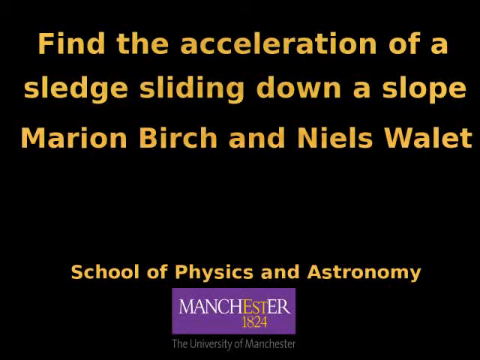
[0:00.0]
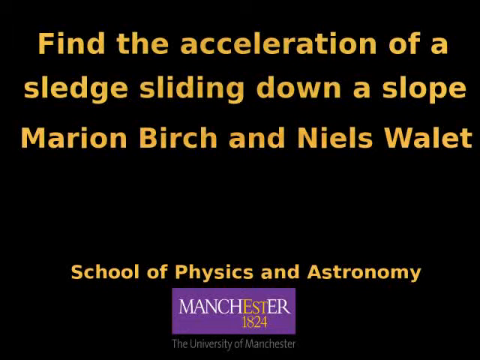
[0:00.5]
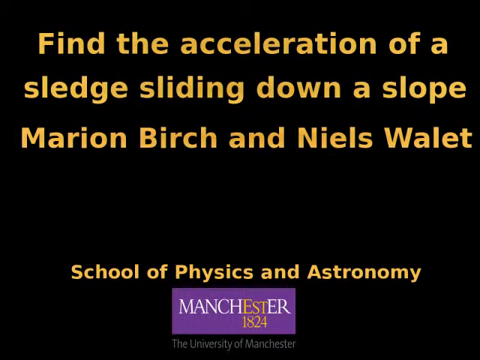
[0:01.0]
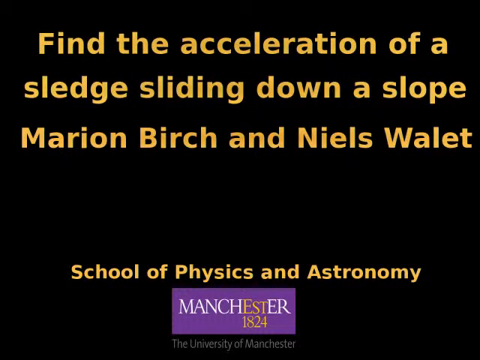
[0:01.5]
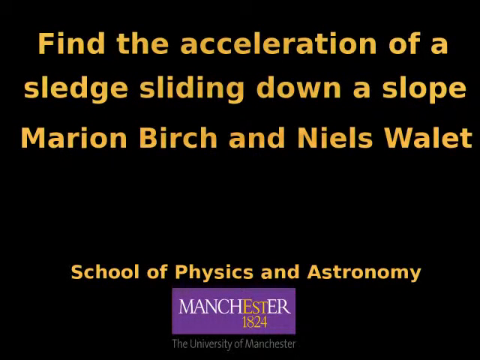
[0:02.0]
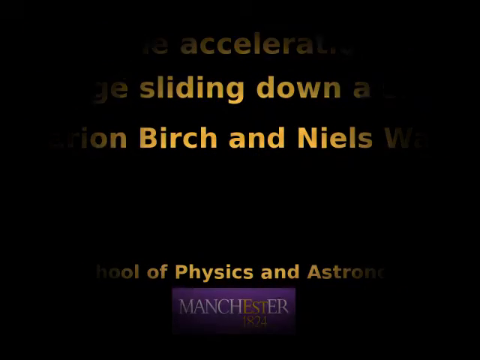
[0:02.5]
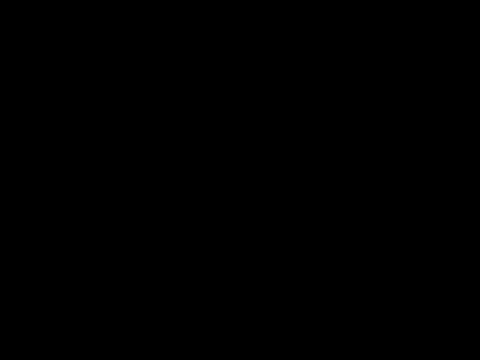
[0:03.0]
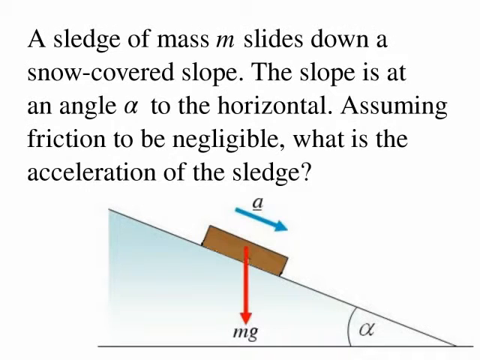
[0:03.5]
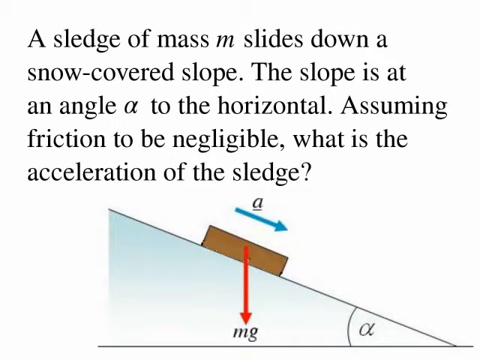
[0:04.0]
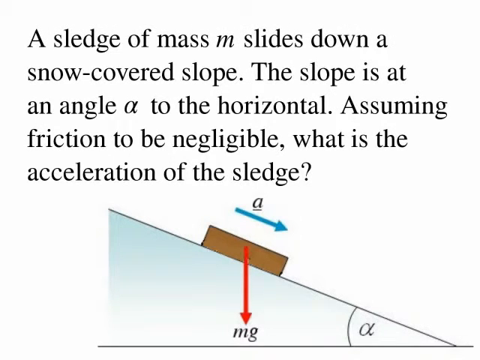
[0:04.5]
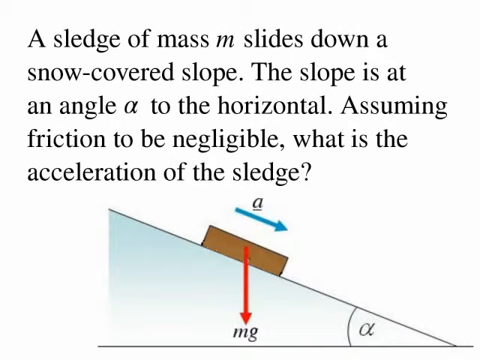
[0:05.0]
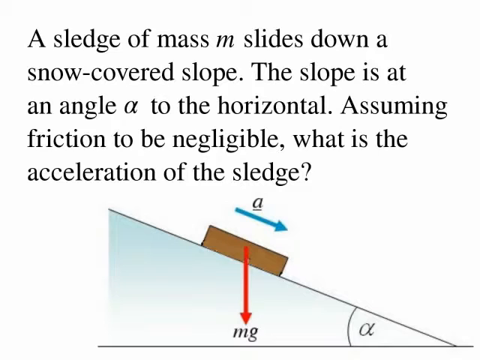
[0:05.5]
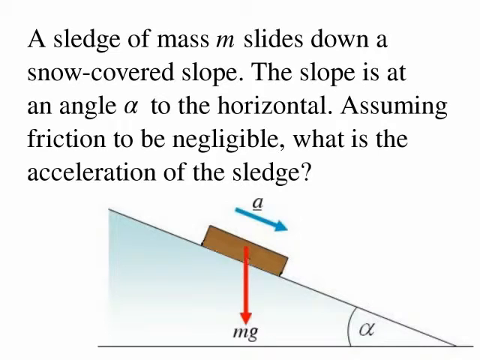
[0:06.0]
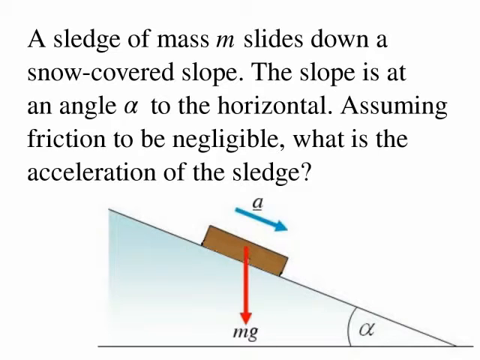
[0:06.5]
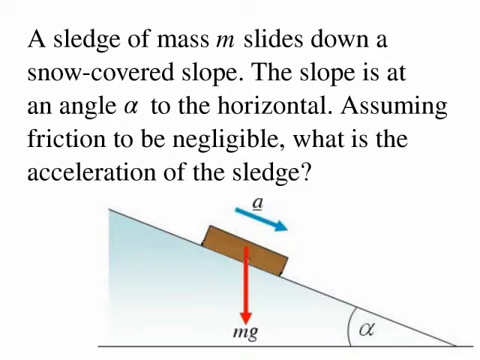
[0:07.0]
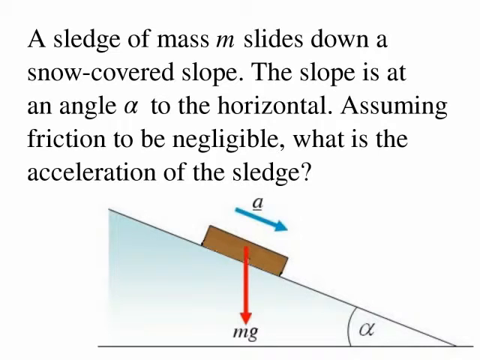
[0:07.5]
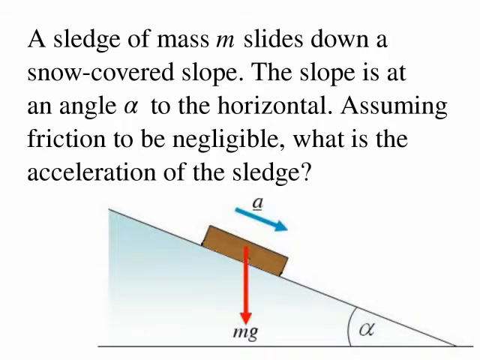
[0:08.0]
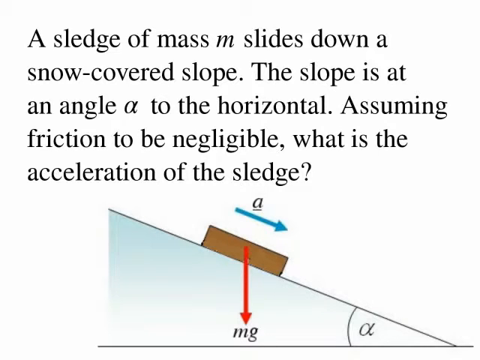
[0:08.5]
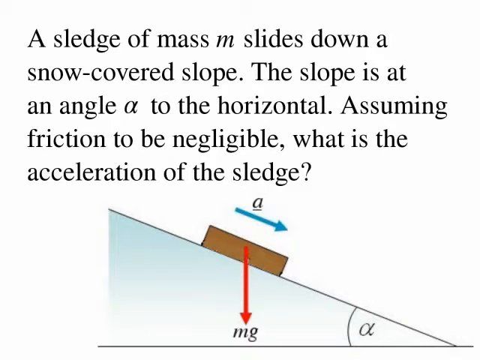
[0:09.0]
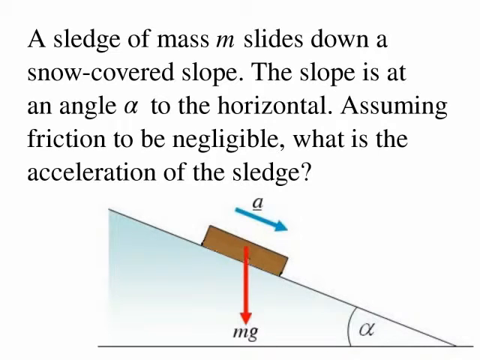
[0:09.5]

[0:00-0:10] The video opens with a title in yellow text on a black background: "Find the acceleration of a sledge sliding down a slope by Marion Birch and Niels Wallet. School of Physics and Astronomy, Manchester, 1824." A task is also shown: "A sledge of mass m slides down a snow-covered slope. The slope is at an angle alpha to the horizontal, assuming friction to be negligible. What is the acceleration of the sledge?" A picture of the problem with arrows and the task data is visible.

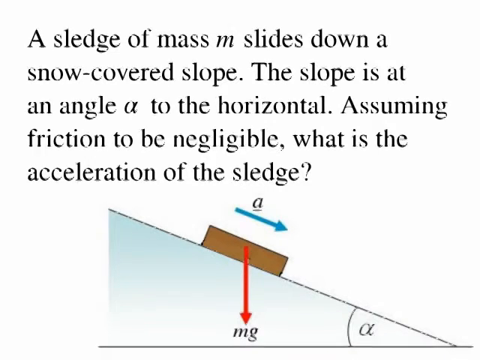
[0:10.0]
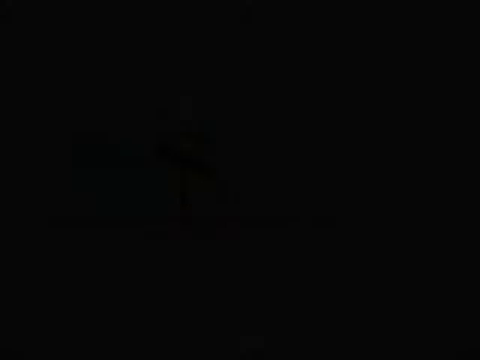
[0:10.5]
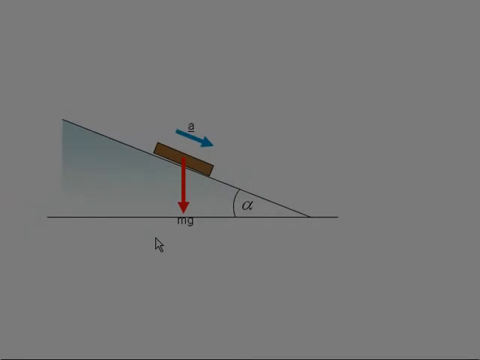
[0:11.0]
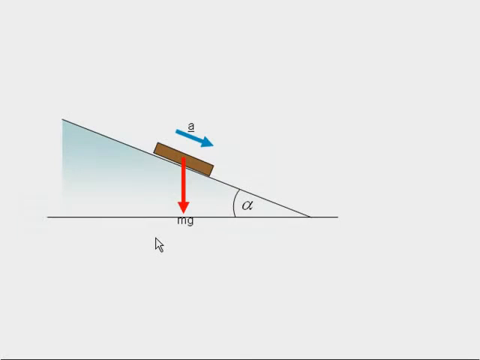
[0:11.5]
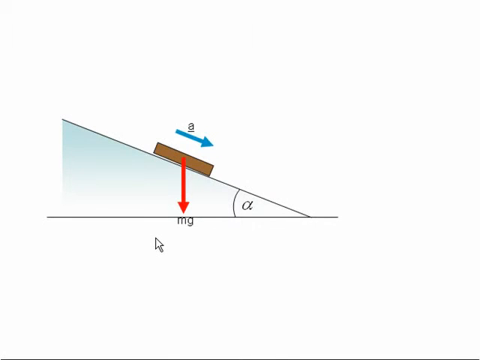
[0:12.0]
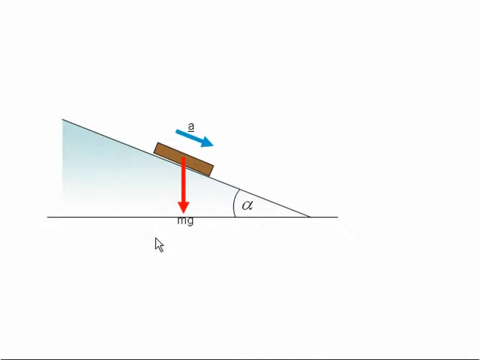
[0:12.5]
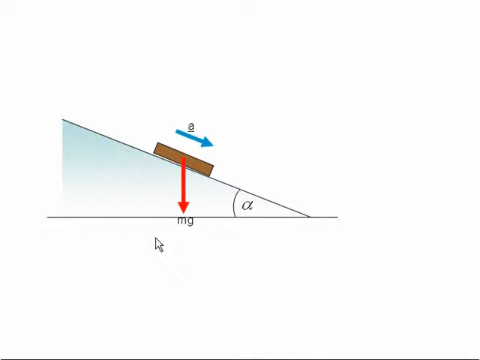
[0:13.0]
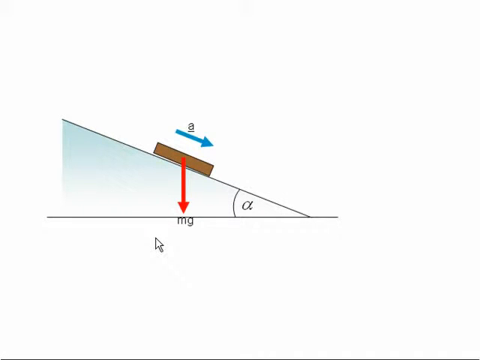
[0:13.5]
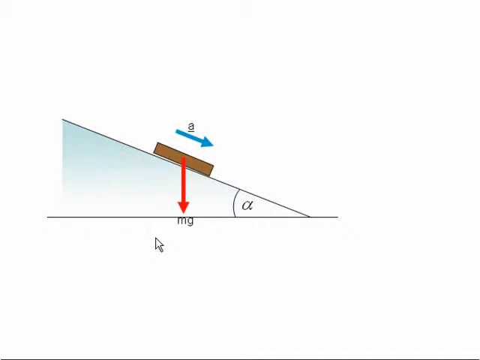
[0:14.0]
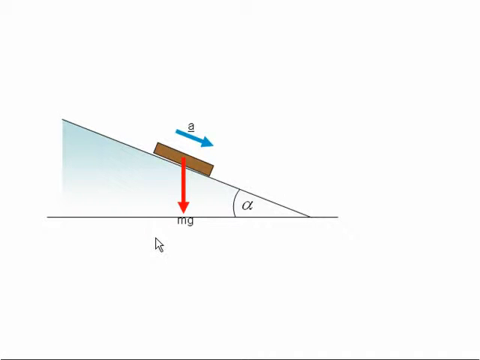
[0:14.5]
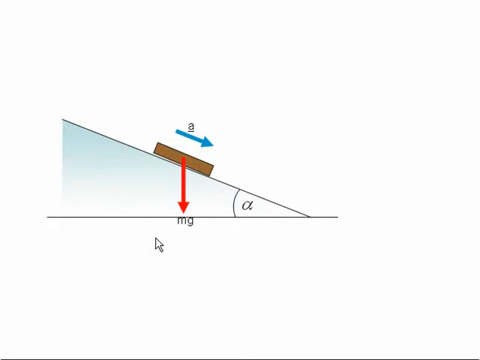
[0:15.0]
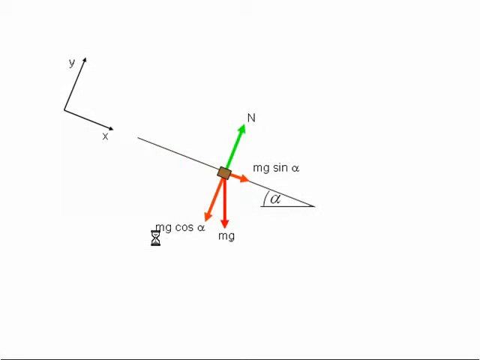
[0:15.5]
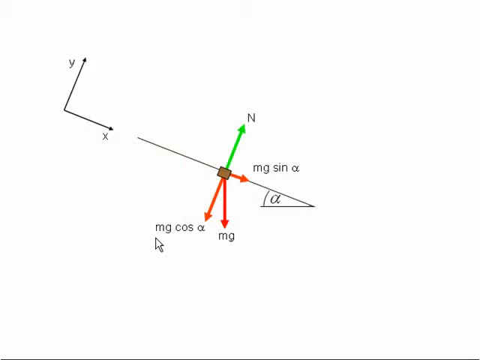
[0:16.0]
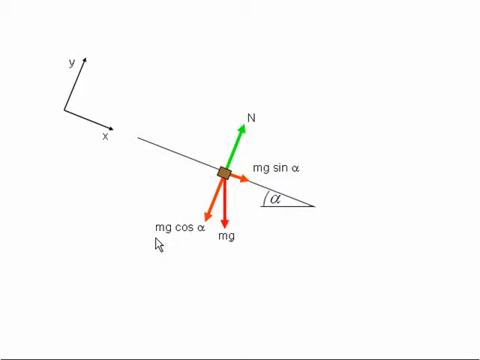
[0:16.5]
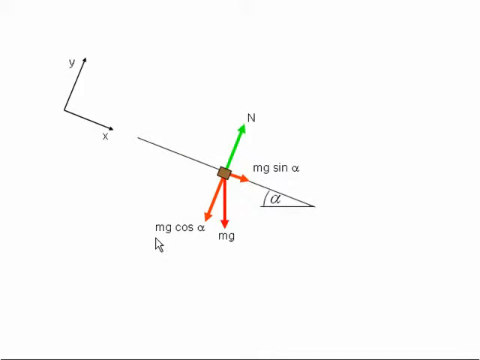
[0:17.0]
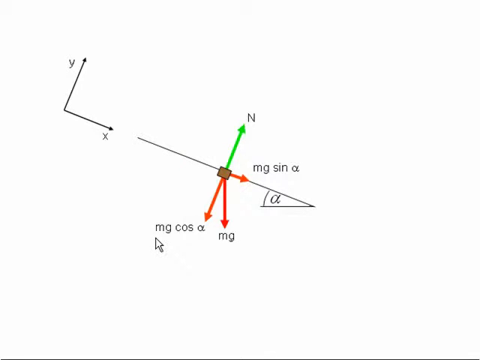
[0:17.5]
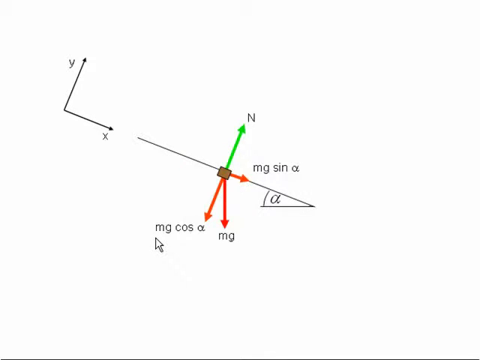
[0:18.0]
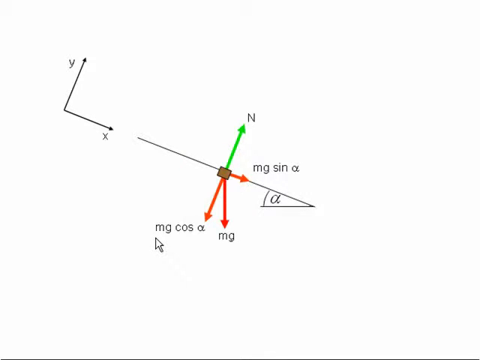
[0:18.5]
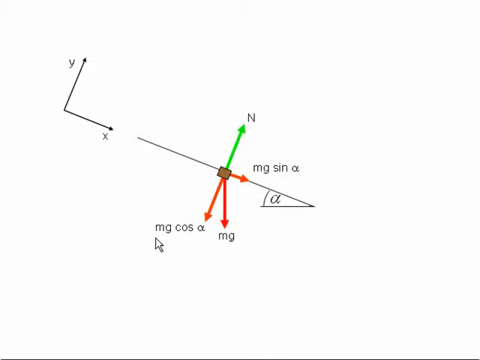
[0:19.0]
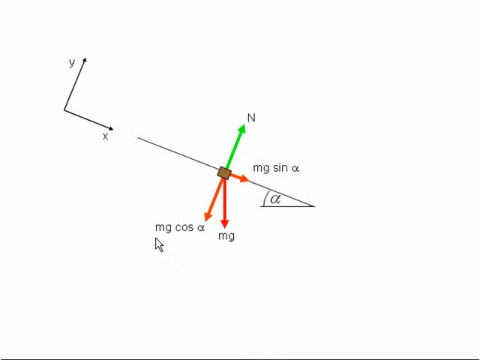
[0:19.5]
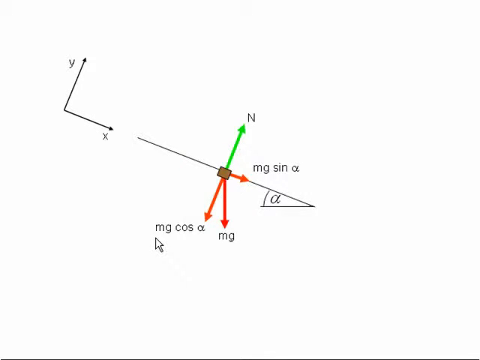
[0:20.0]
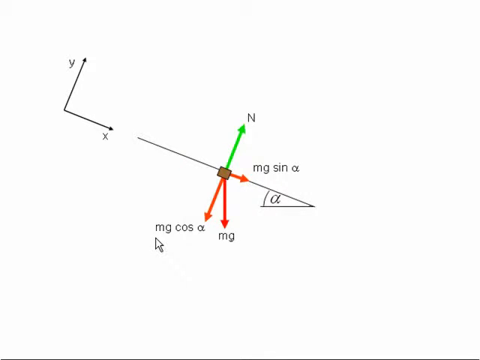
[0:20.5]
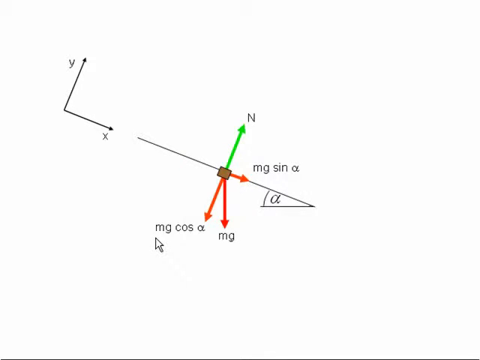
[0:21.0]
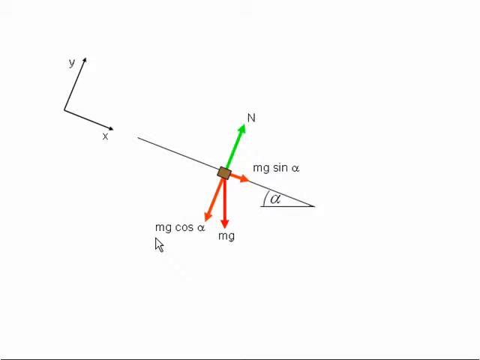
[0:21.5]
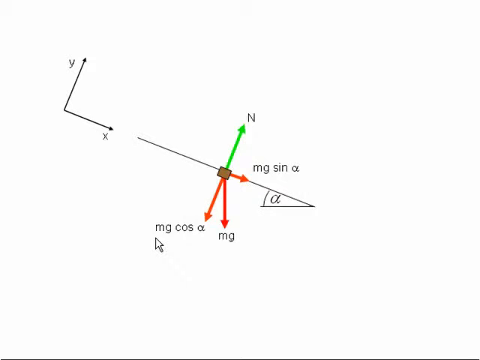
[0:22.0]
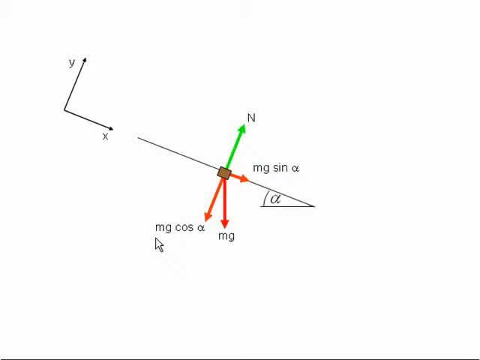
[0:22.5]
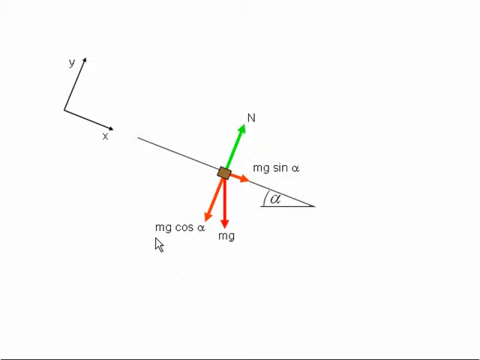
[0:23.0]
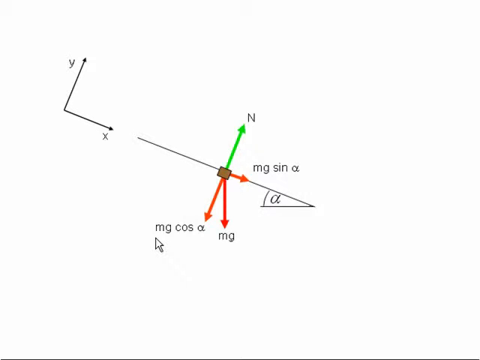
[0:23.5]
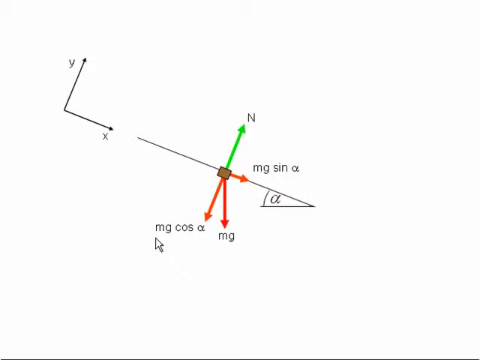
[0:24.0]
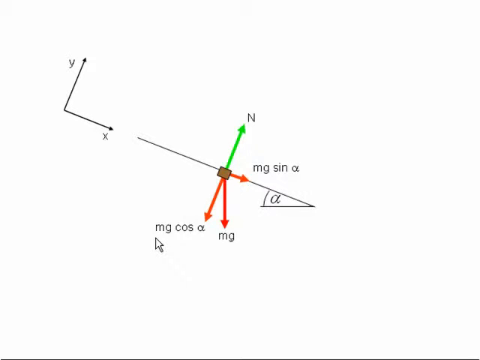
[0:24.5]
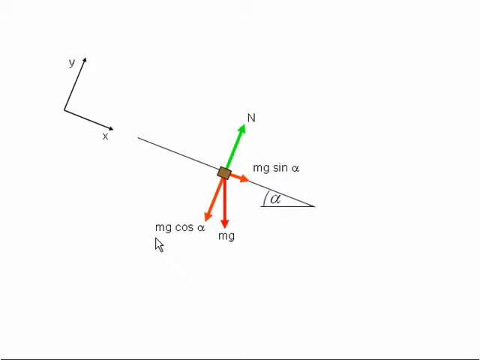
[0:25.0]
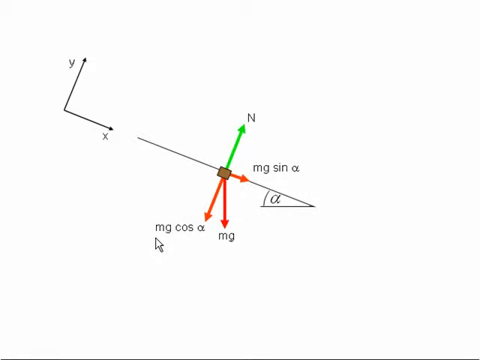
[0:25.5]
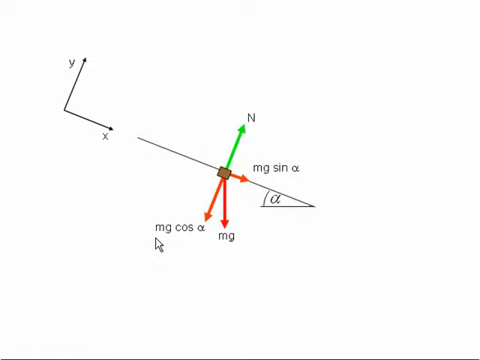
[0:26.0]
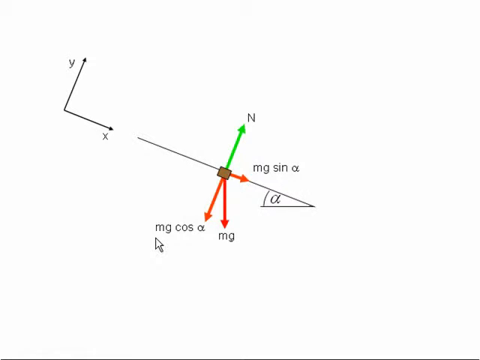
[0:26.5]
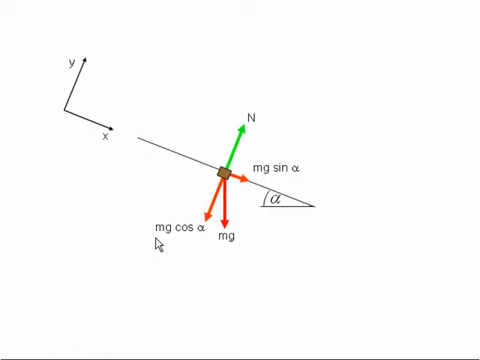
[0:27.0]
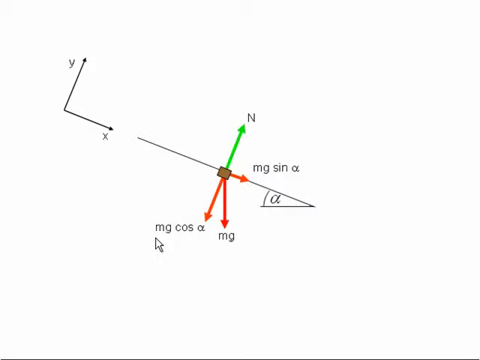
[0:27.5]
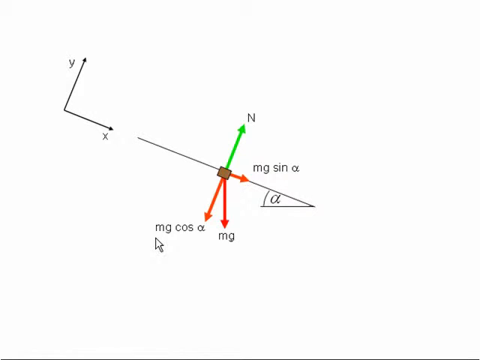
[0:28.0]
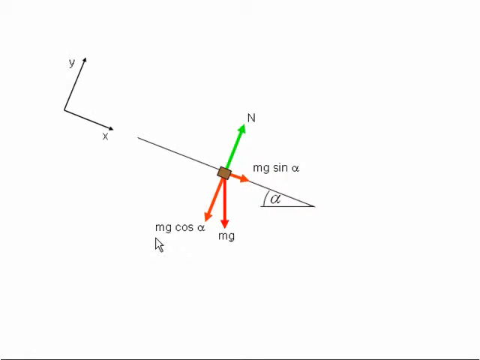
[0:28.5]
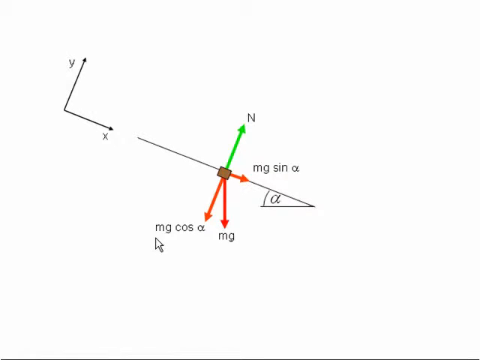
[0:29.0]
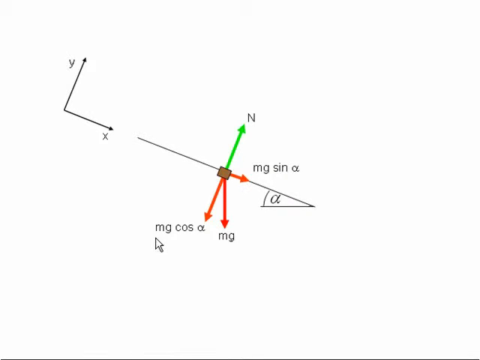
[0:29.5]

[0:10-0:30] The task is shown: "A sledge of mass m slides down a snow-covered slope. The slope is at an angle alpha to the horizontal, assuming friction to be negligible. What is the acceleration of this sledge?" The next slide shows only a drawing of the problem: two lines forming the angle alpha, and the main object, a brick. Two arrows come from it: a red arrow pointing down, labeled mg, and a blue arrow labeled a, pointing south-east. Another slide follows with Y and X arrows forming a coordinate system. On the x line there are other lines with the angle alpha: an N line pointing north, mg sin alpha toward the x side, mg cos alpha pointing down, and mg to the right of the previous arrow.